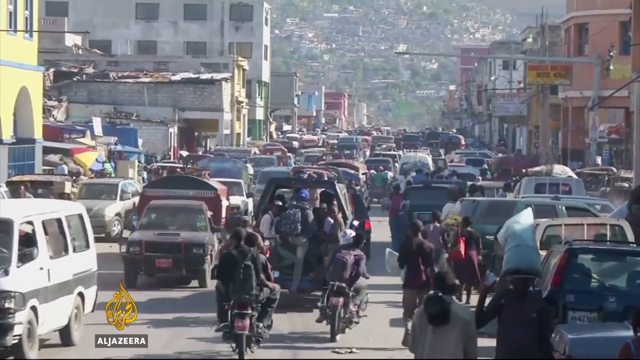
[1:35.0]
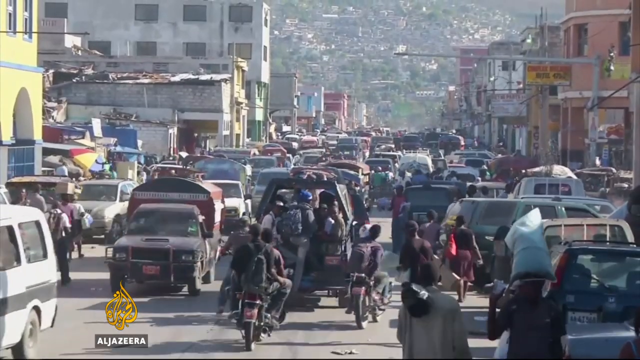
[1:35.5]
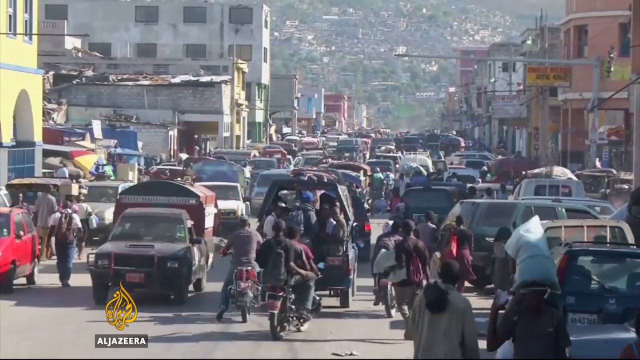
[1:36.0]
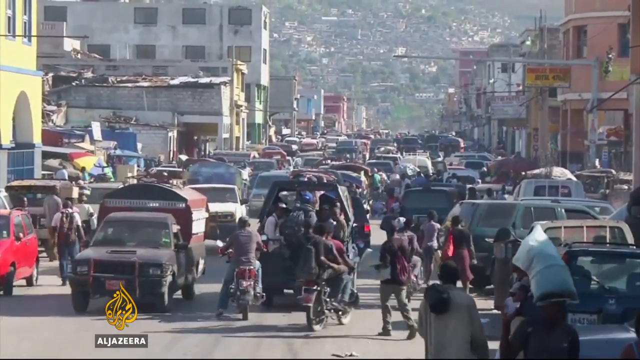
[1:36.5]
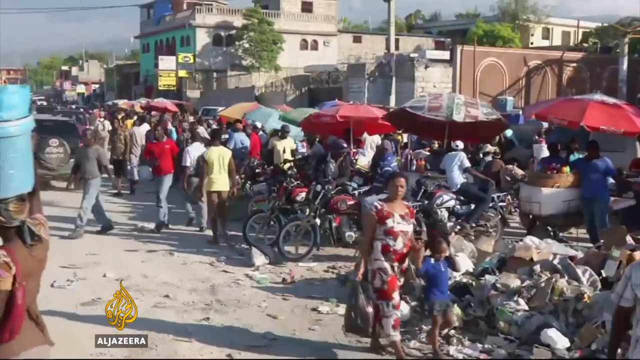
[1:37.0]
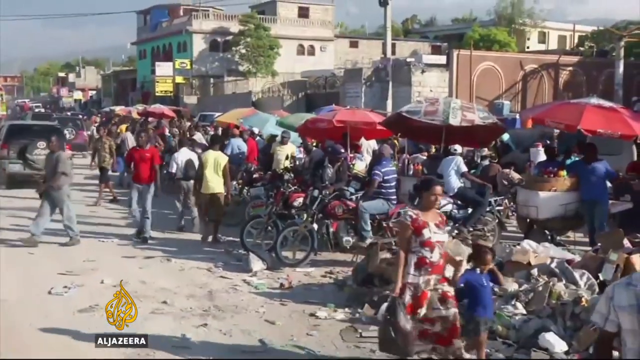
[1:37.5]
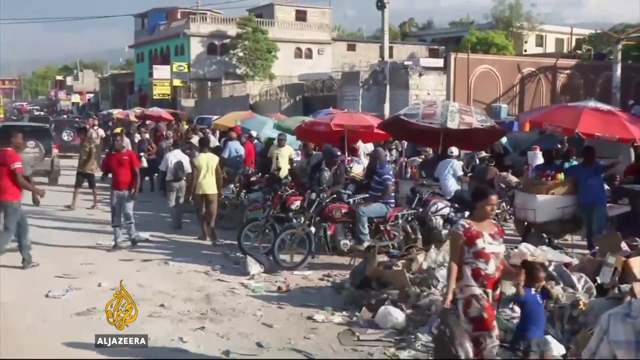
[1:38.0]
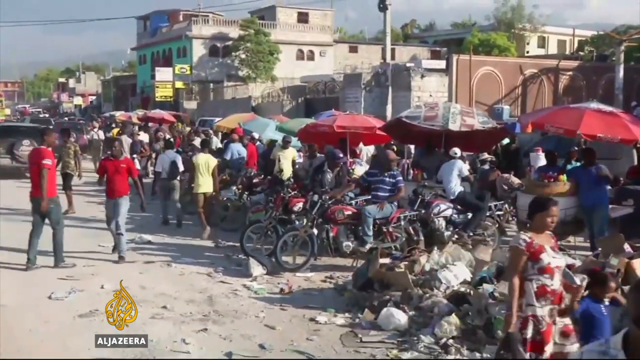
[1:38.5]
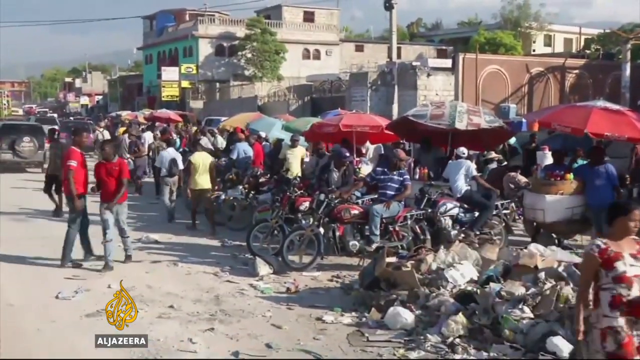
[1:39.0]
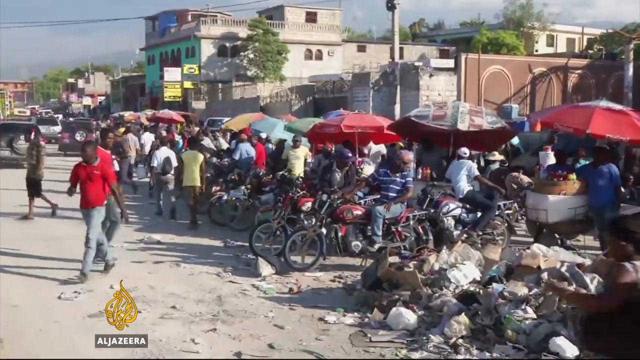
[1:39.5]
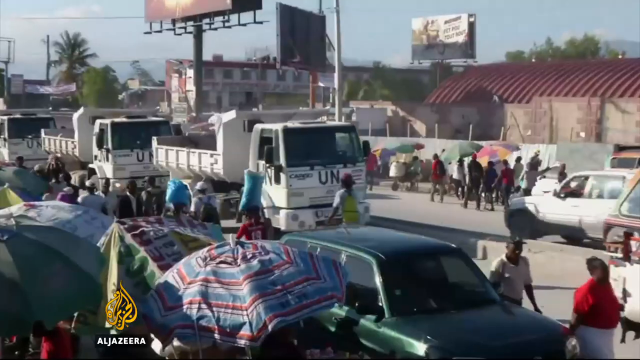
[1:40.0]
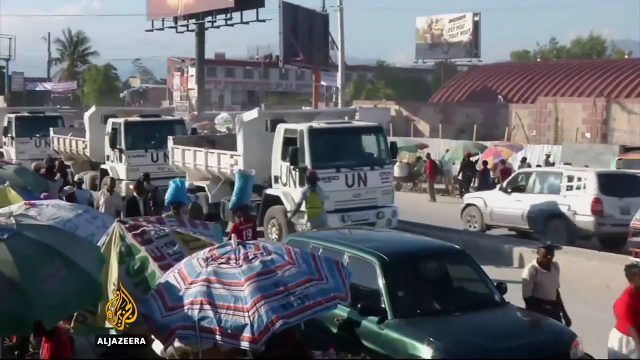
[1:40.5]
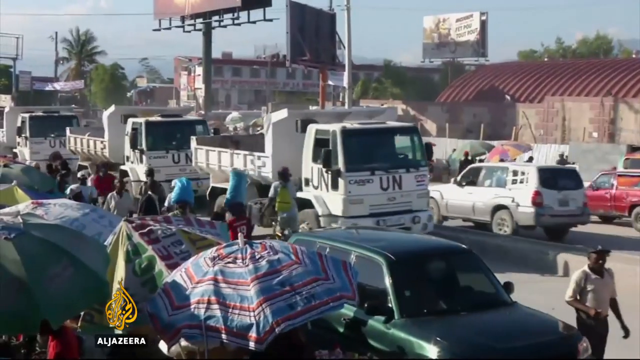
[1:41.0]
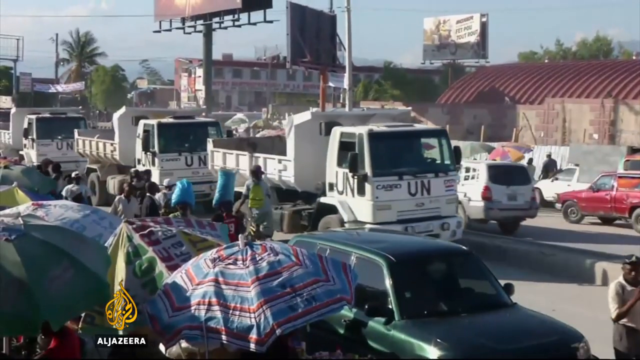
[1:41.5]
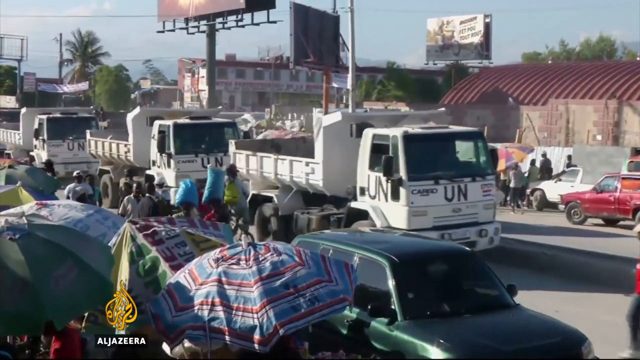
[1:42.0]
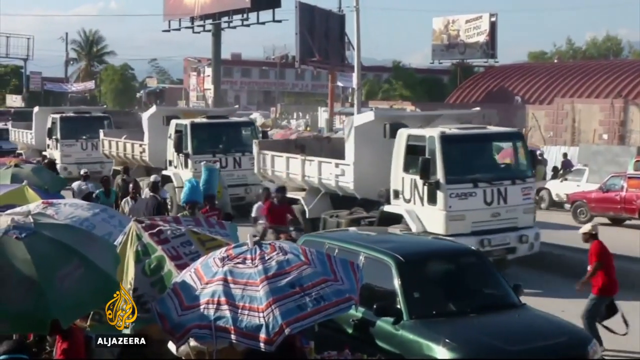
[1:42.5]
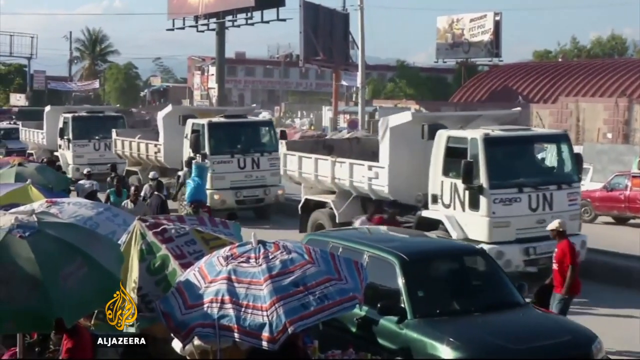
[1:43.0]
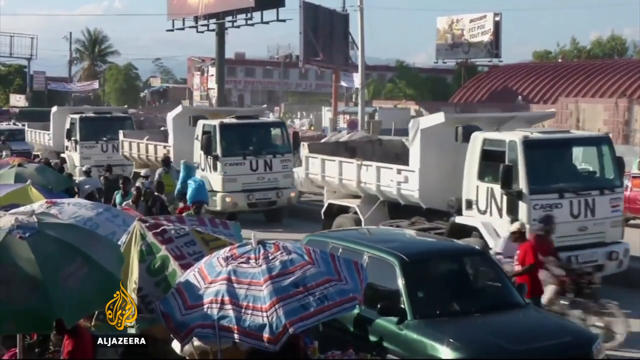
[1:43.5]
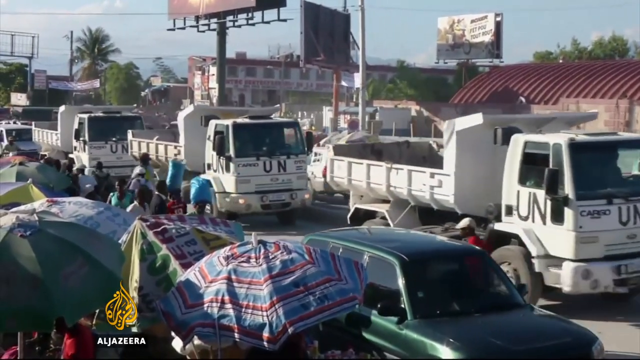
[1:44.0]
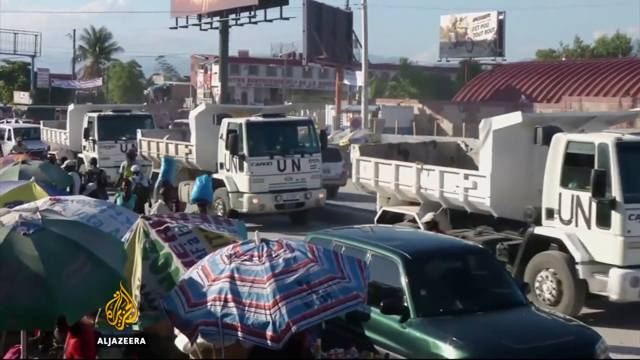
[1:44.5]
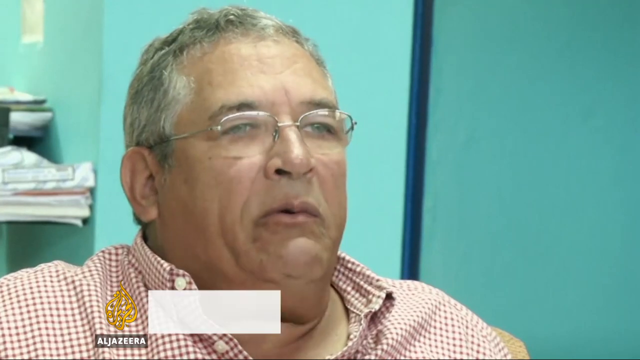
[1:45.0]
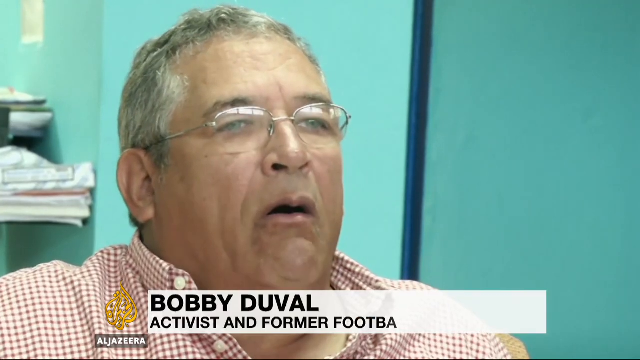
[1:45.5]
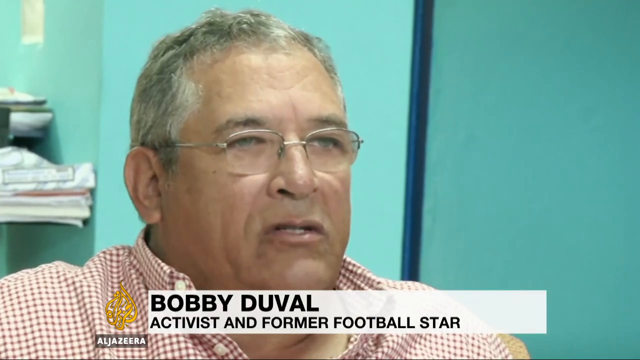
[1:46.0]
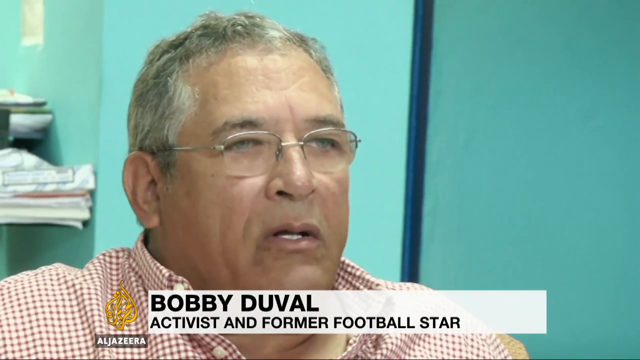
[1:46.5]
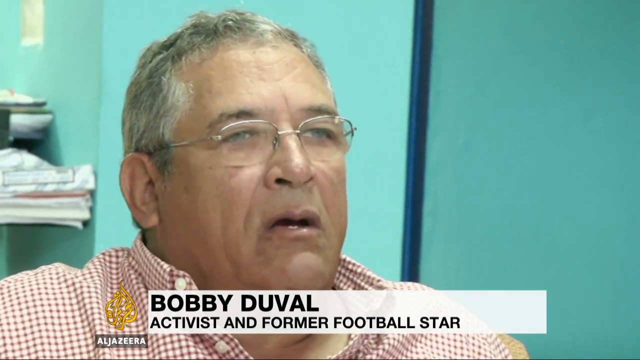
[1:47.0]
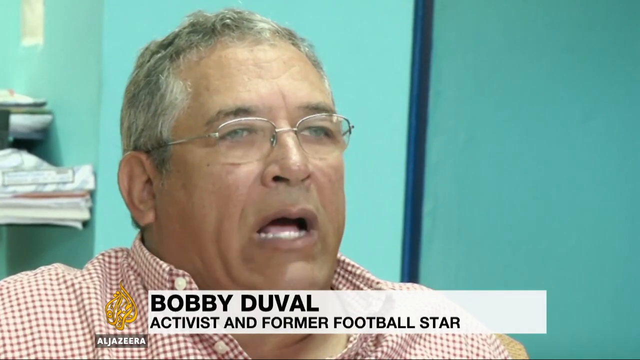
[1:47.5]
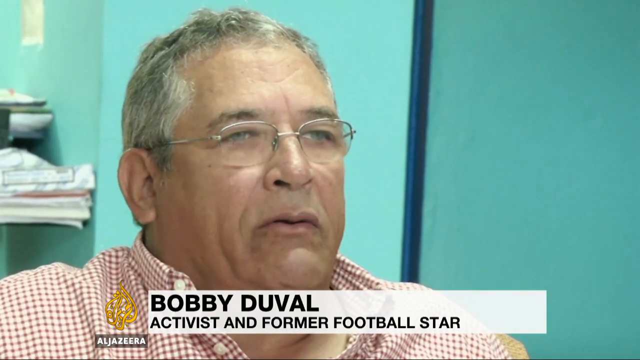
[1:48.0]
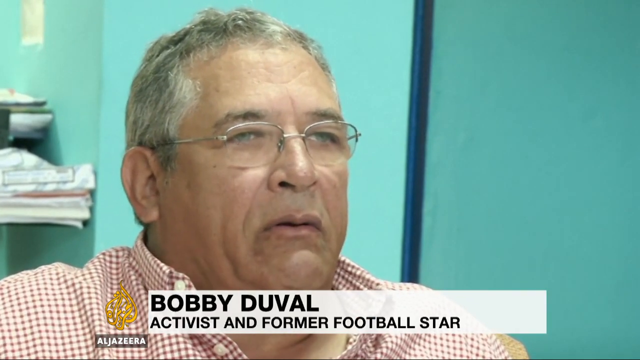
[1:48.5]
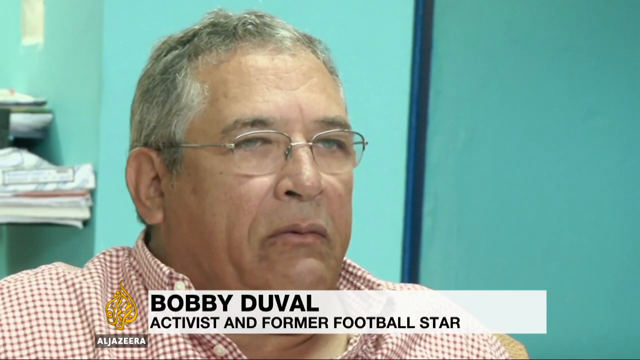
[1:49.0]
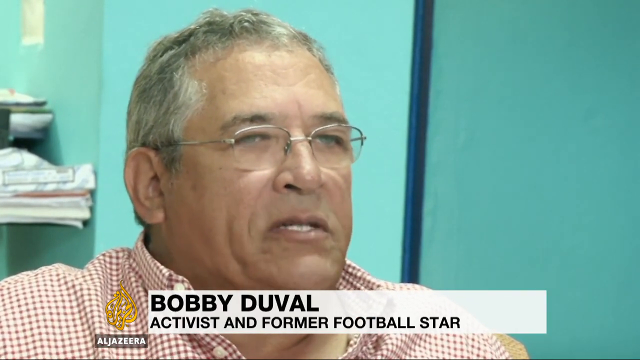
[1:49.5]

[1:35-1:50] Text reads "Haiti's plans to revive army draw...", with the Al Jazeera logo in the bottom left corner. Bobby Duvall, a former football star and activist, is shown. A UN convoy of three big white dump-looking trucks moves very slowly through the streets. The crowded street has traffic going both ways and people walking both ways on both sides of the street. People are crowded together under umbrella stands, possibly selling things or protecting themselves. Everybody seems to be carrying items in their hands, some people's heads are covered with scarves, and most of the men wear pants.